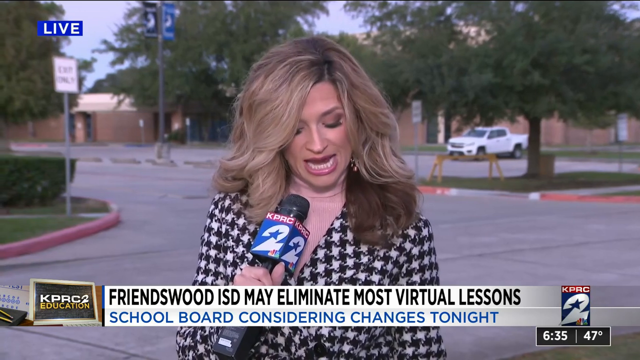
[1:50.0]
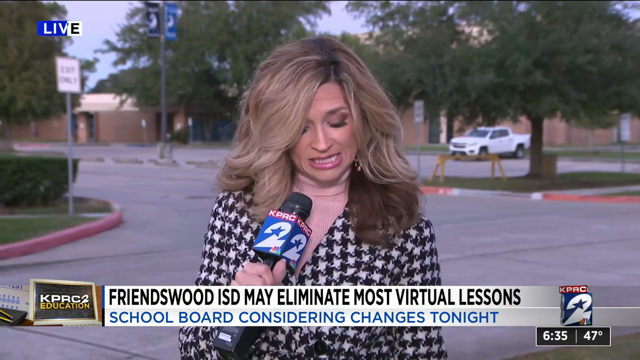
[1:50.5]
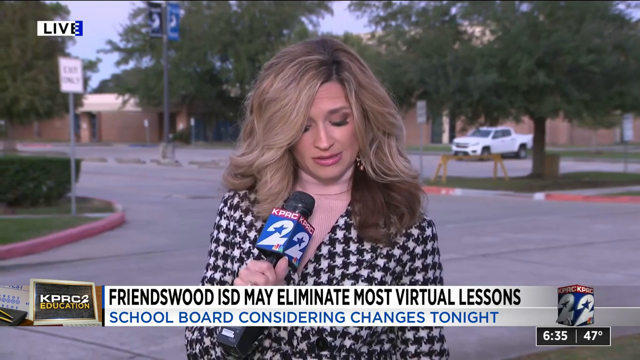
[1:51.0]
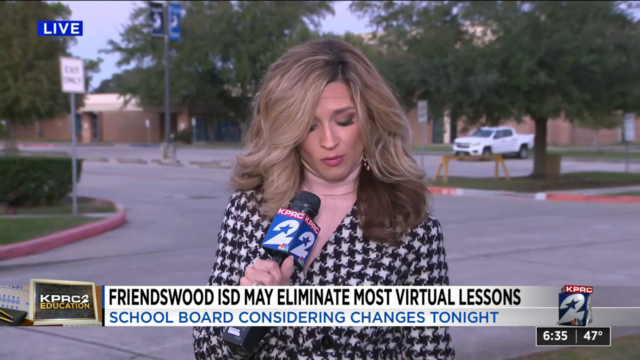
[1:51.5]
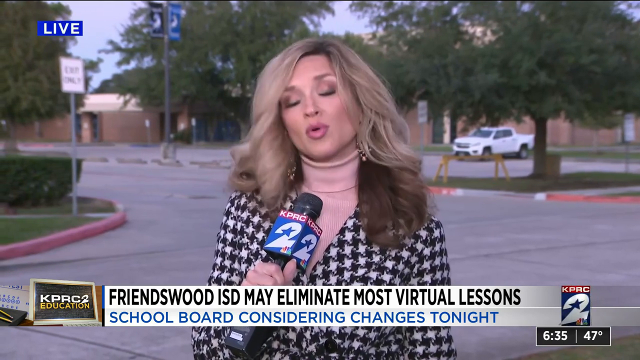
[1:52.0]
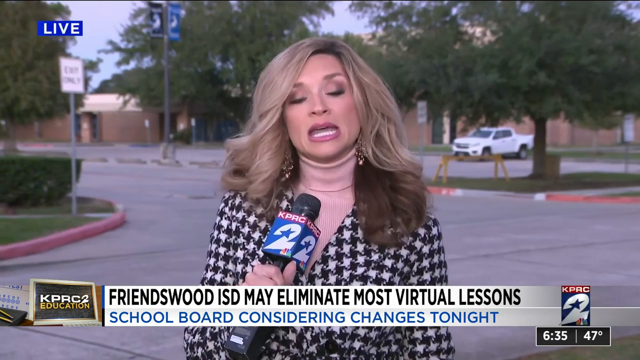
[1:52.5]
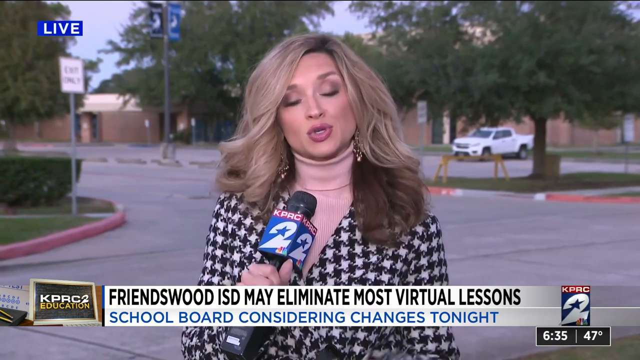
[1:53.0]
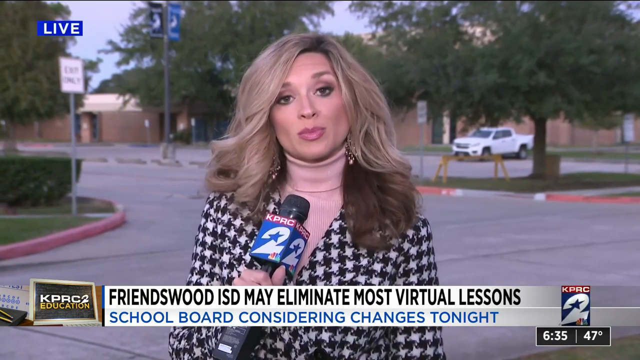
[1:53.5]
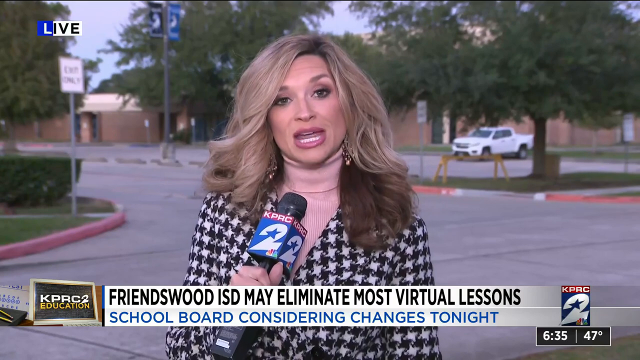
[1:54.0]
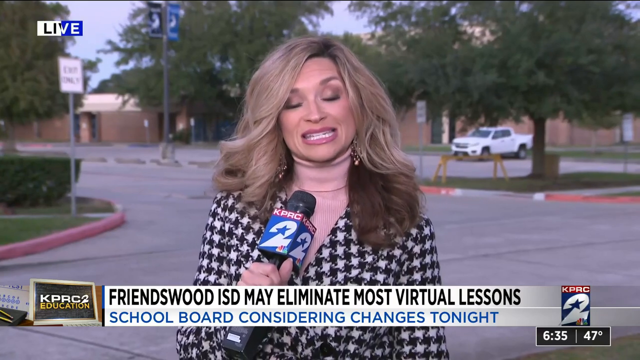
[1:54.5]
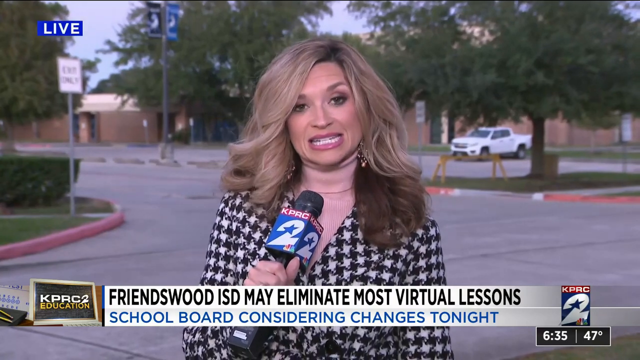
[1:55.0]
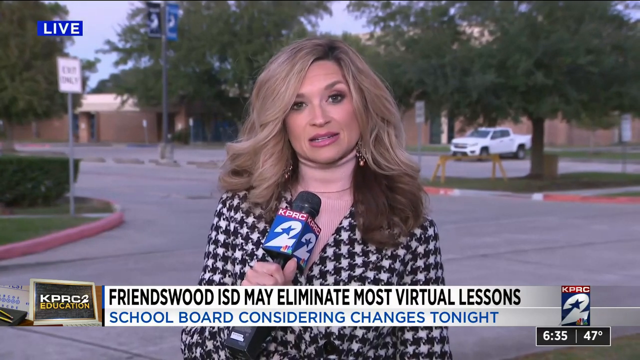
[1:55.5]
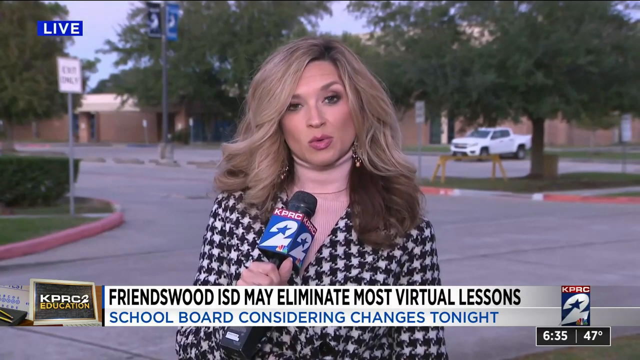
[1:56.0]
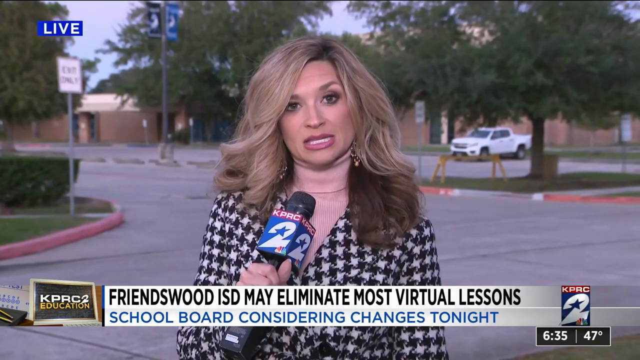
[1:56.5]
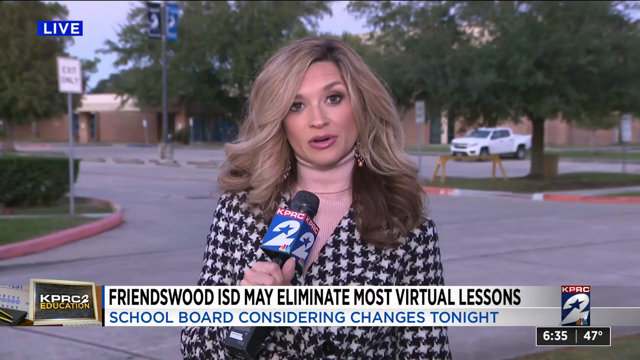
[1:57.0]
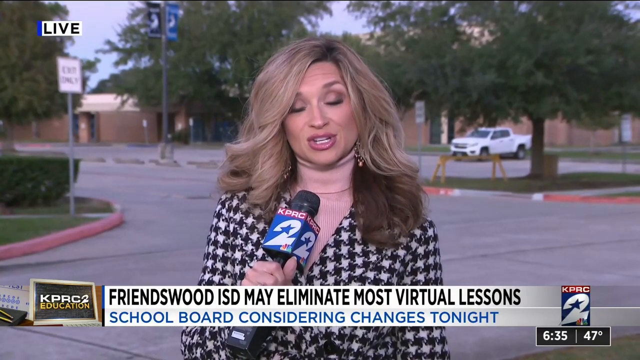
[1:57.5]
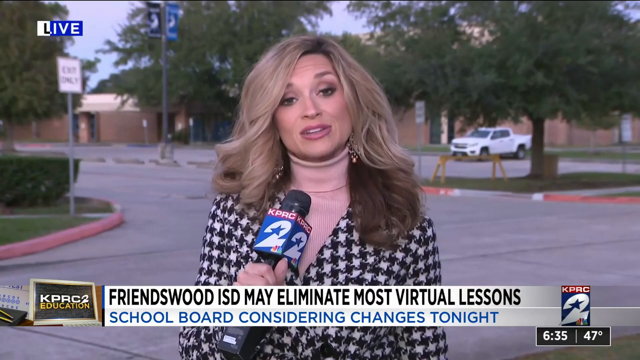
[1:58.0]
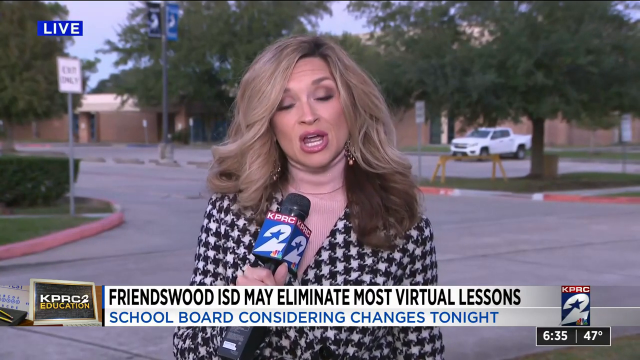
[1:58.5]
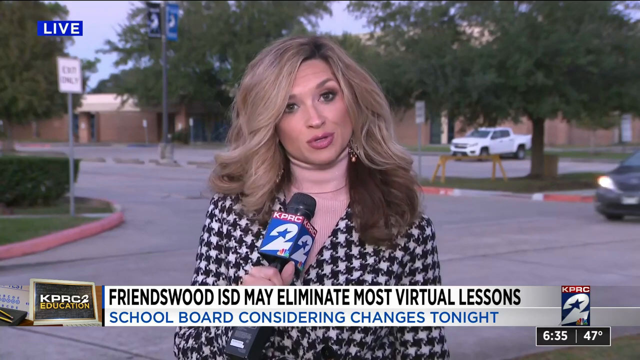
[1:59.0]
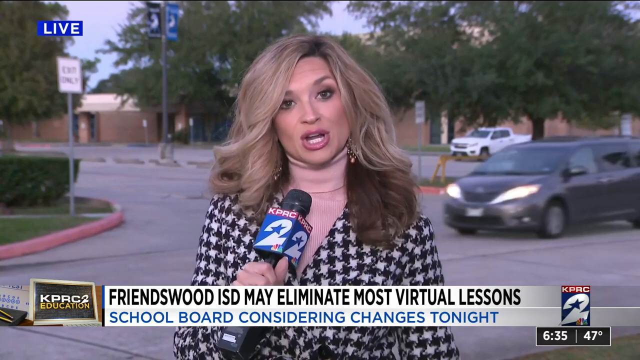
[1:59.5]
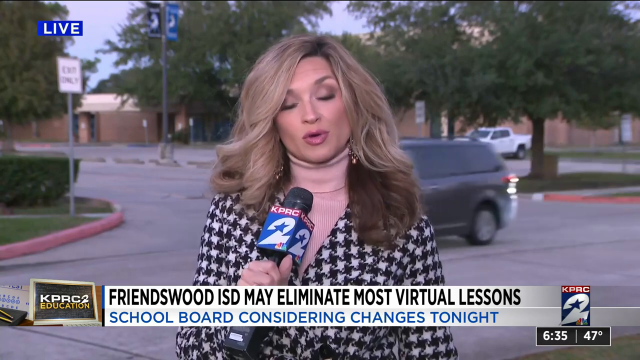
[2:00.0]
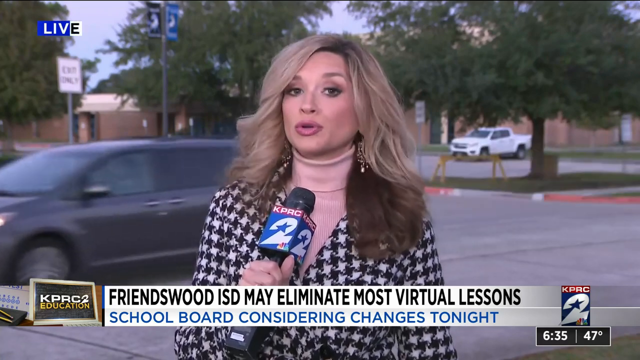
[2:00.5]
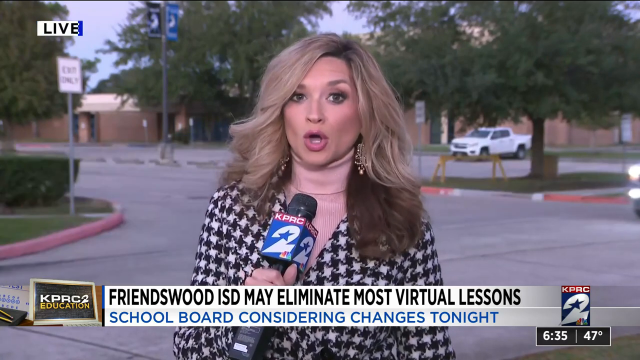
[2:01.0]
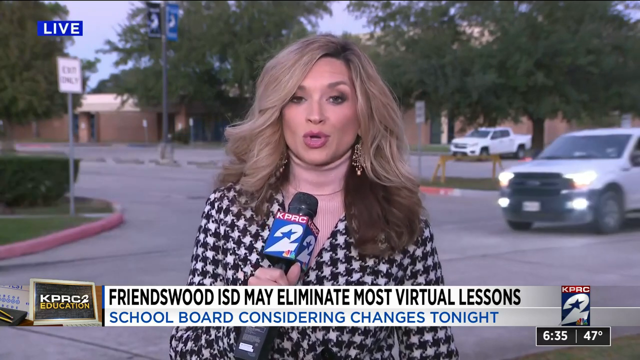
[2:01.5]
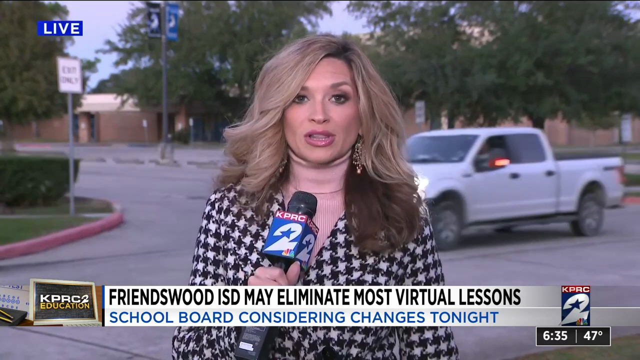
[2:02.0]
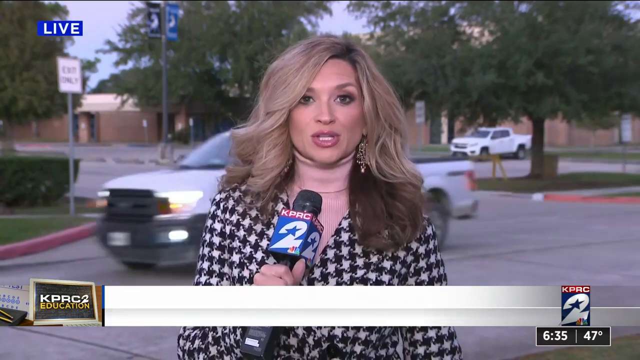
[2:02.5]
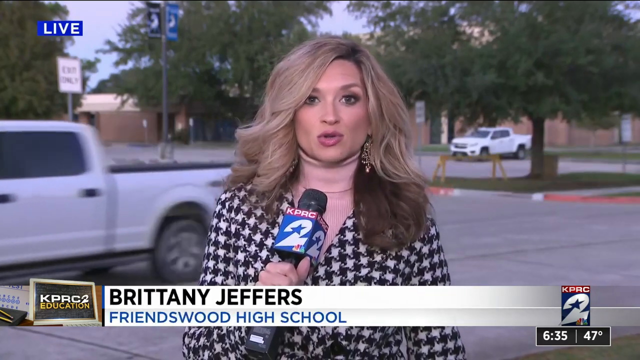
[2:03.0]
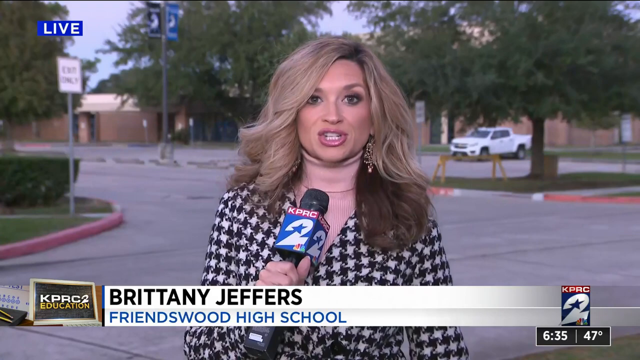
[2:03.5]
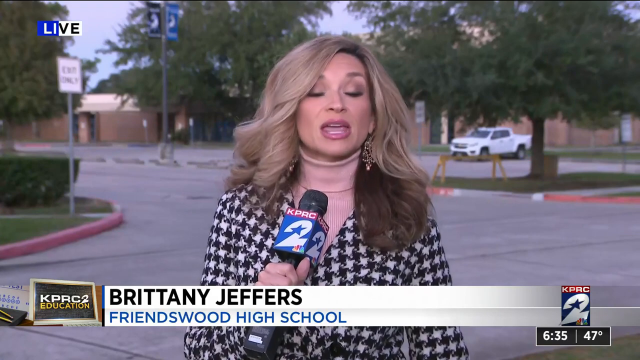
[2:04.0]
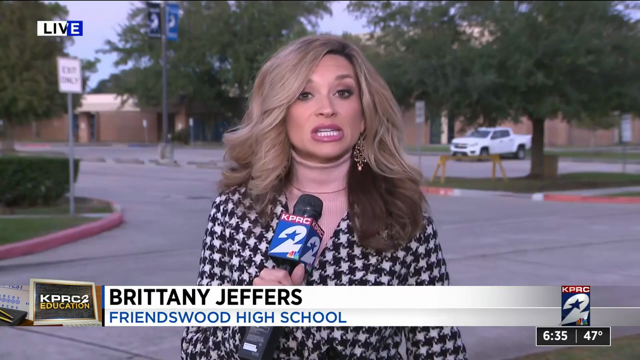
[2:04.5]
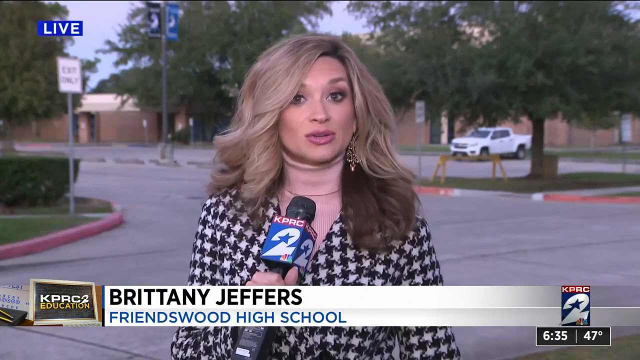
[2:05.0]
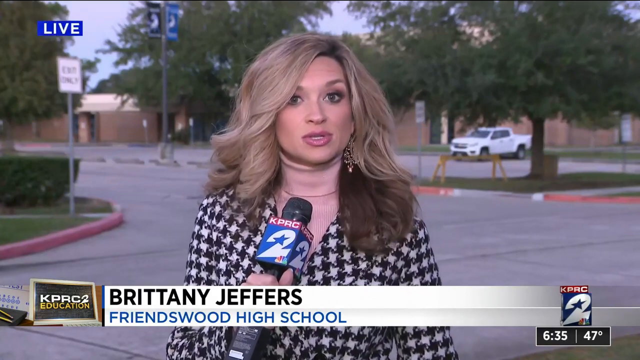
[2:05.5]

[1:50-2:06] The same woman continues her live report, still talking. She wears a black and white sweater and a pink turtleneck. A car drives by. Her name appears: Brittany Jeffers, and she is standing outside Fredenswood High School, the place her report is about. It is possibly late in the day, since many cars are out. At the bottom left, a logo reads "KPRC 2 education," apparently the logo for the segment.